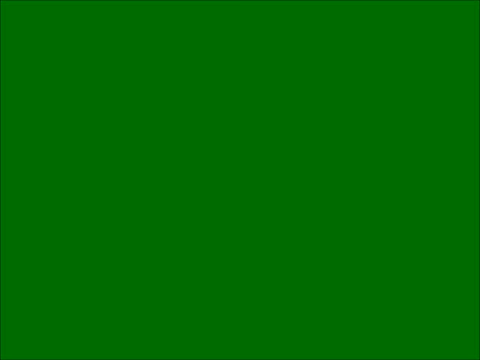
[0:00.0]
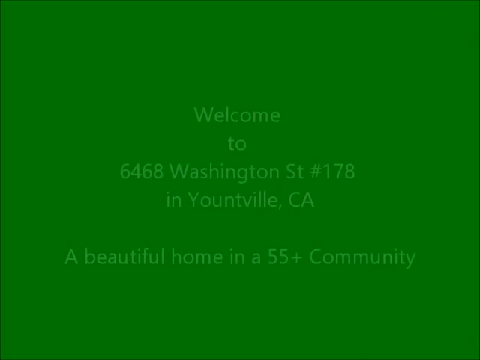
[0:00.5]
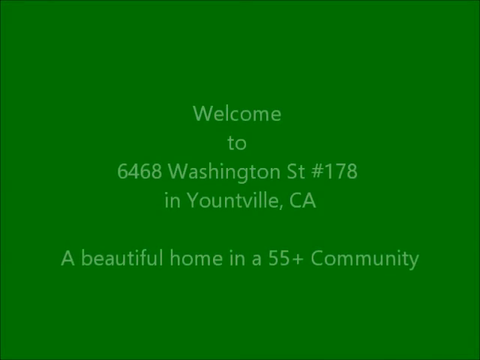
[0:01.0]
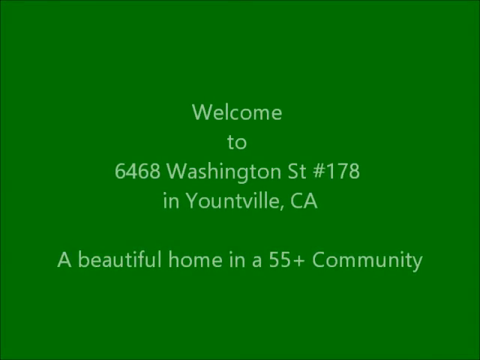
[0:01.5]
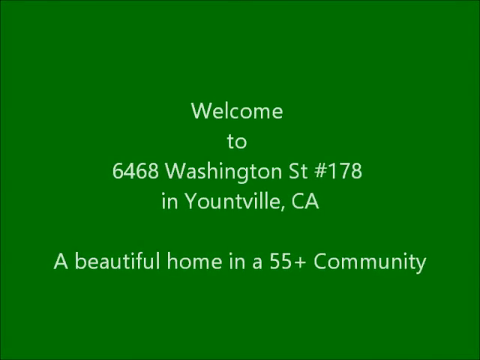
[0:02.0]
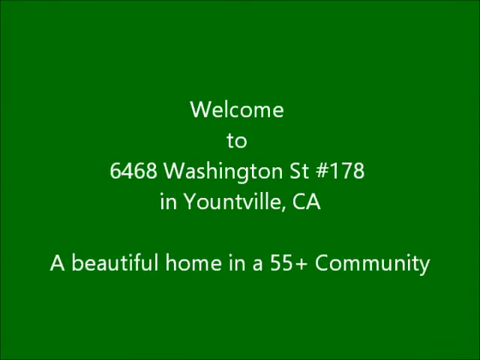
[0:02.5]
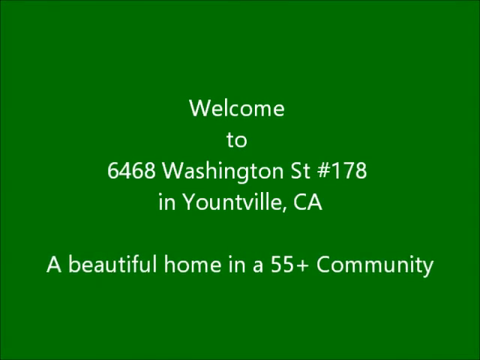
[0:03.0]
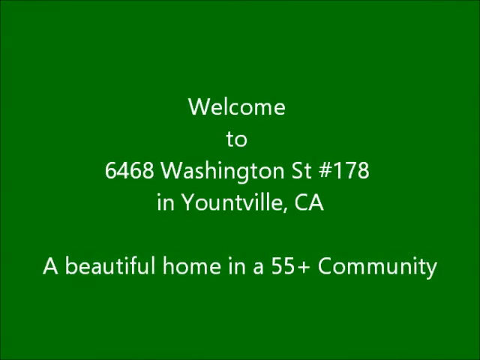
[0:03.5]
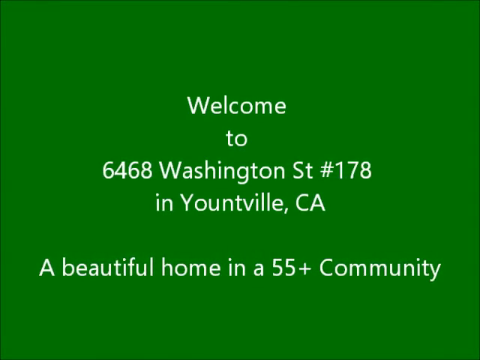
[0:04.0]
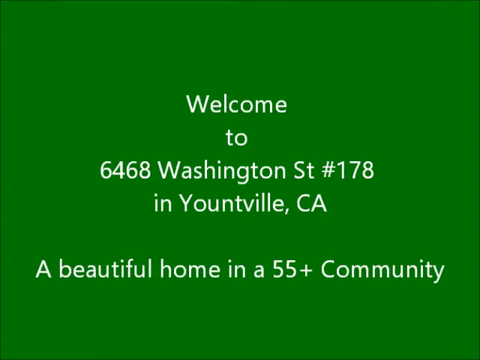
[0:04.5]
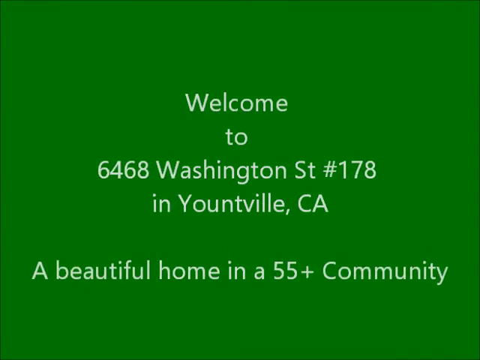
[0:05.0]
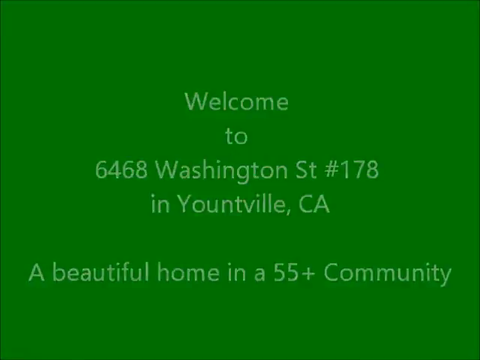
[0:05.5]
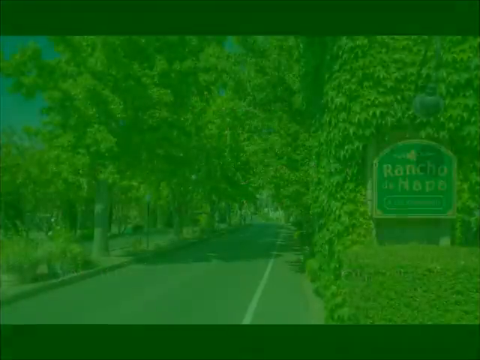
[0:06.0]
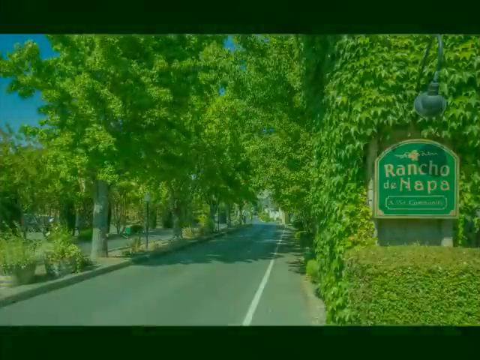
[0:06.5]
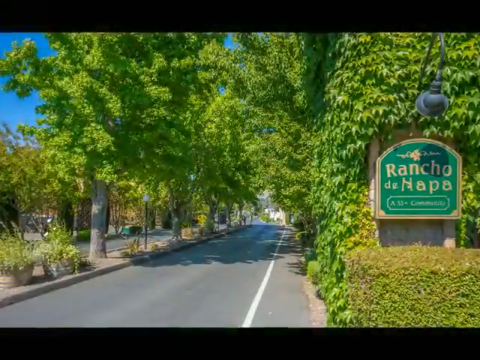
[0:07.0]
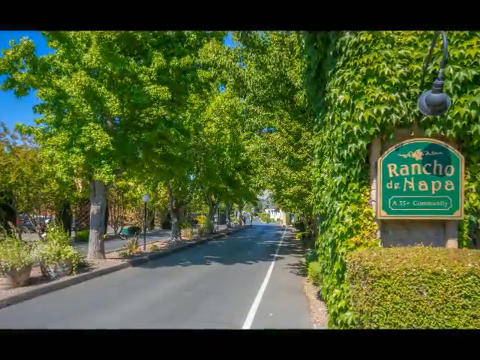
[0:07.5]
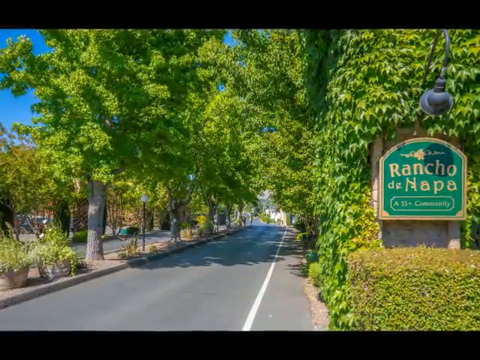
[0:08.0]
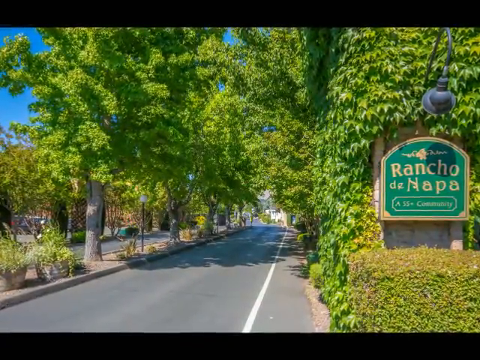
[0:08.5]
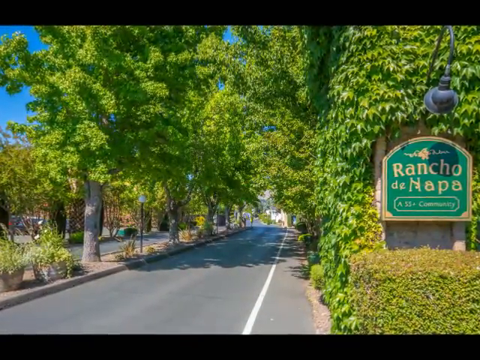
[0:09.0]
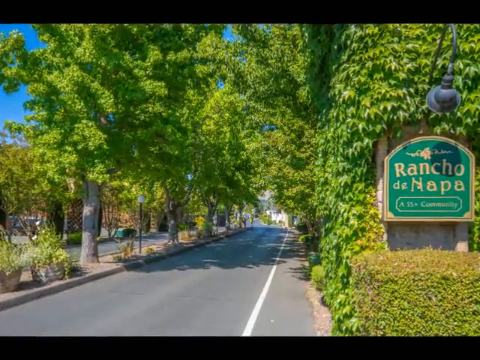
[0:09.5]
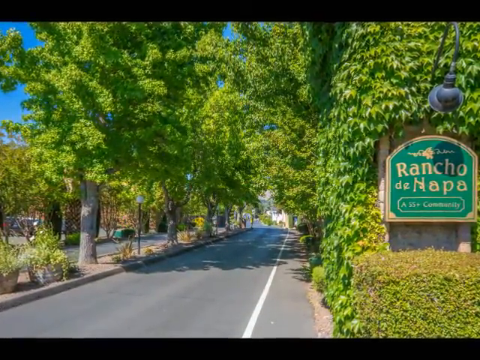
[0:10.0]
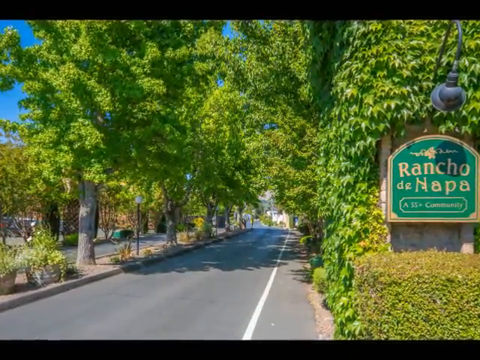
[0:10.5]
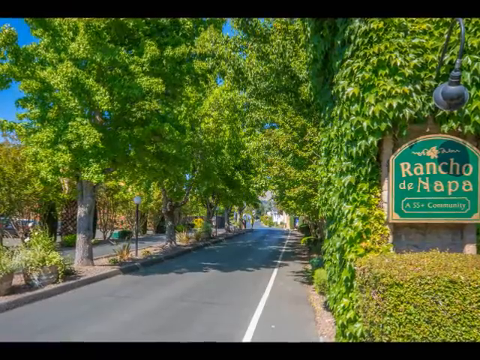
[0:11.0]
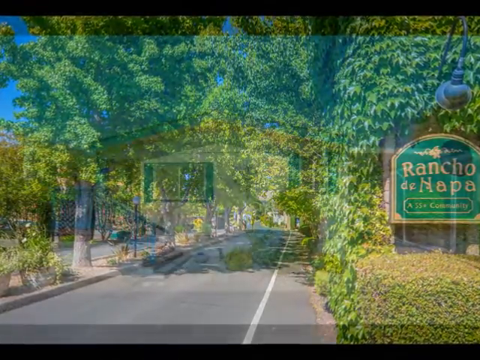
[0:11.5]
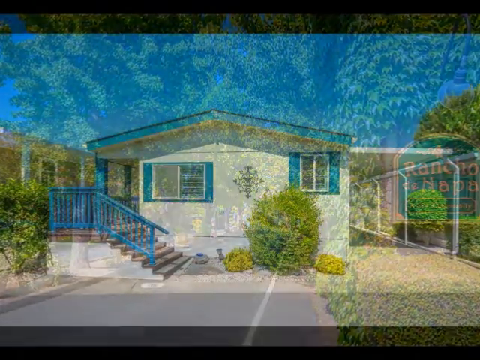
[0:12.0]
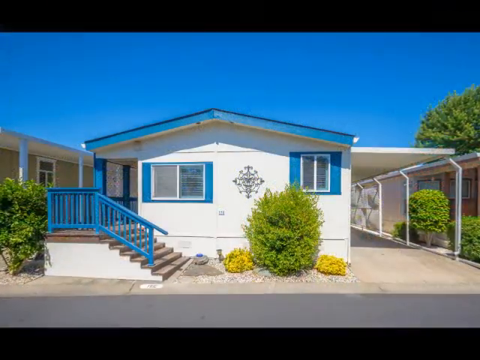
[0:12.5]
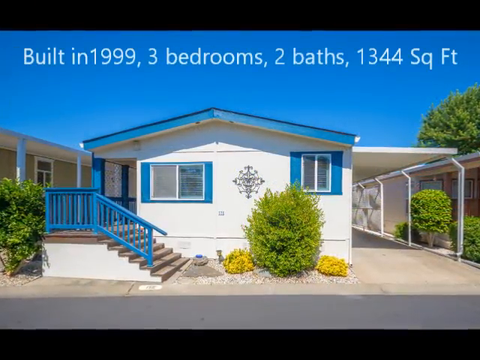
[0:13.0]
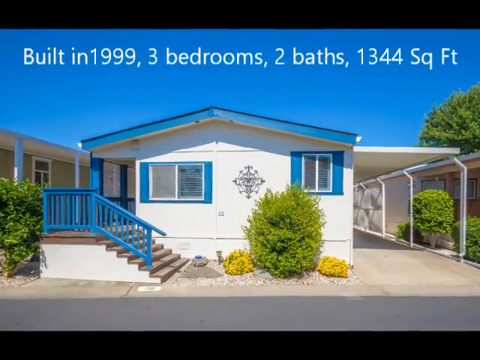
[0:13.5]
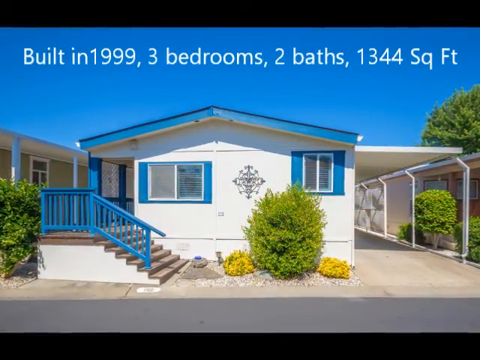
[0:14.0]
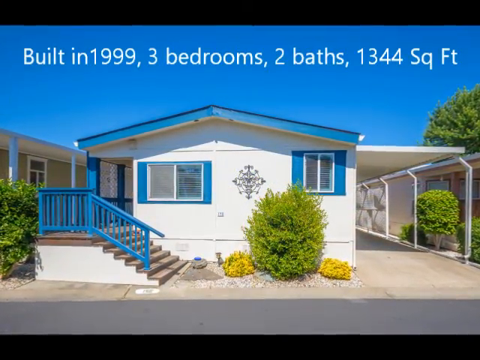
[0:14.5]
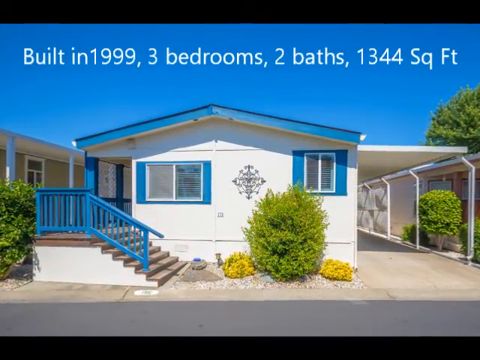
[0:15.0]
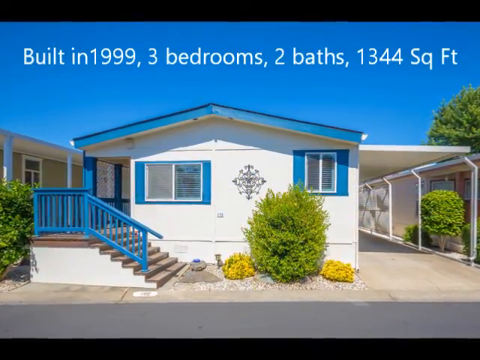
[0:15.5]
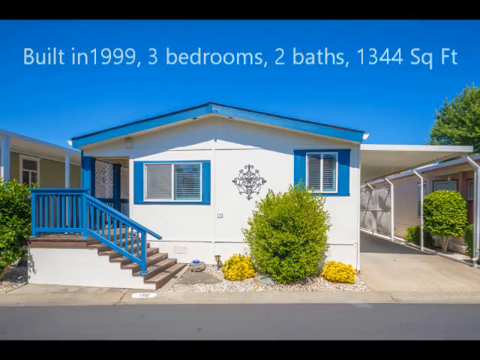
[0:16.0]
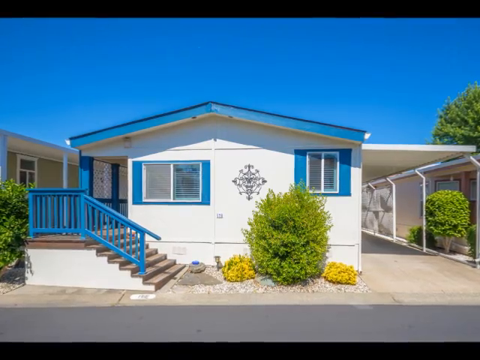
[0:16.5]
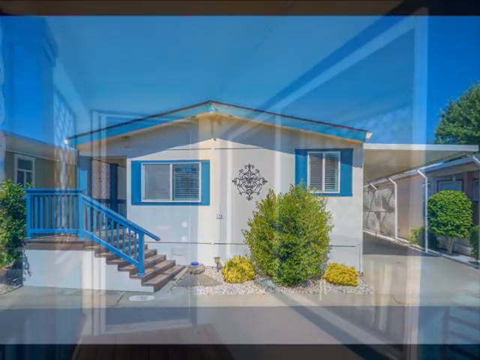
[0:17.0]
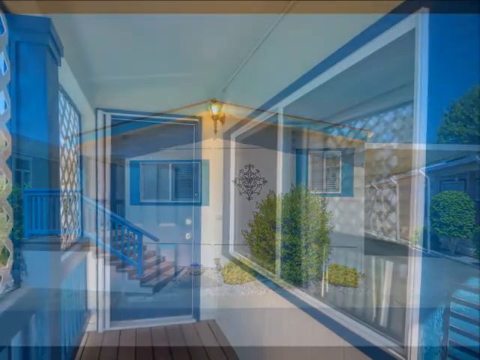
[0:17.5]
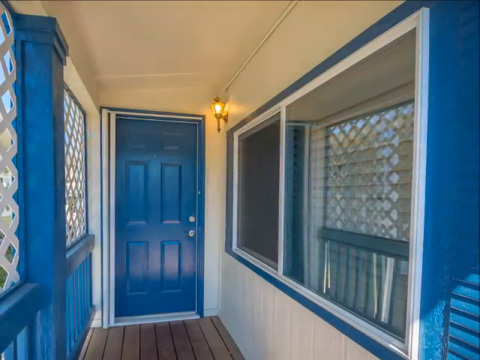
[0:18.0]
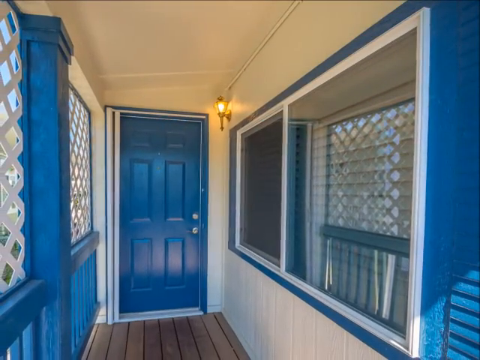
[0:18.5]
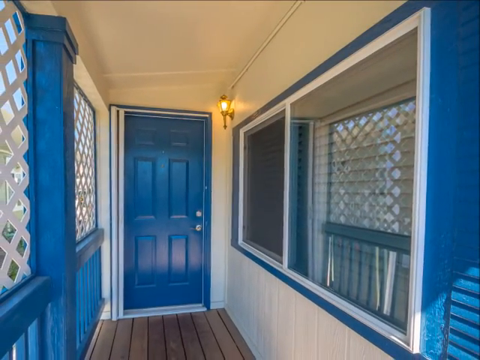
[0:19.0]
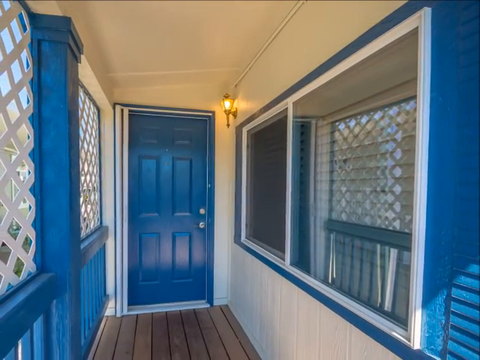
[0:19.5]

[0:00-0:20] The video opens on a green background with a welcome to 6468 Washington Street number 178 in Utenville, California, a beautiful home in a 55 plus community. Part of the community is then shown. Text reads "Rancho de Napa" and says it is a 55 plus community. It appears to be a gated community with a driveway leading up to the area. The home was built in 1999 and is a three-bedroom, two-bath of 1,344 square feet. It appears to be a trailer home or mobile home in a mobile park community. The exterior appears to be mostly beige with blue trim. A close-up of the property suggests it might be a newer property. There look to be several stairs up to the house, a small front porch on one side, and a carport on the right side. The stairs go up on the left-hand side, apparently at least seven of them, to the entrance. Several bushes are in front of the house, along with apparently two windows in front.